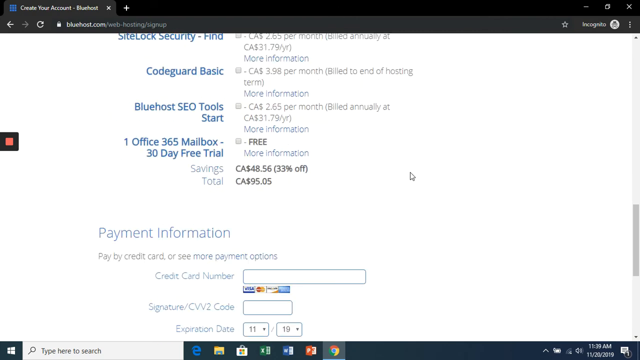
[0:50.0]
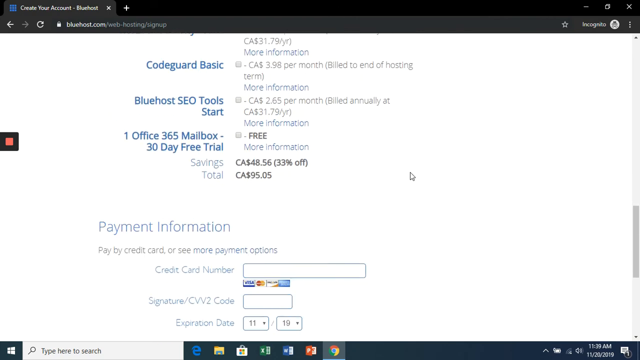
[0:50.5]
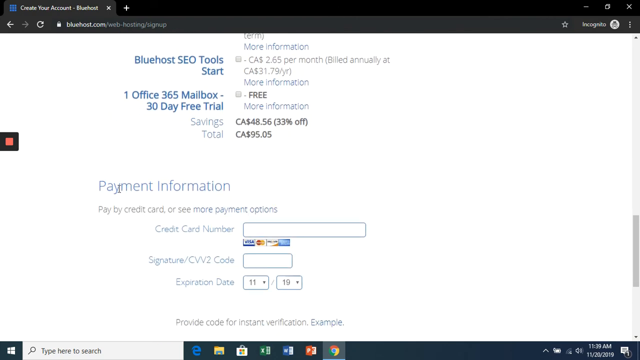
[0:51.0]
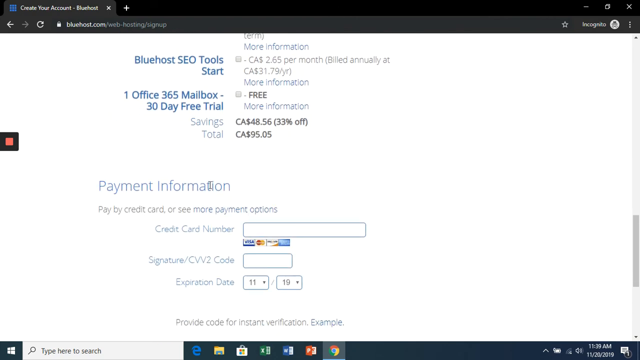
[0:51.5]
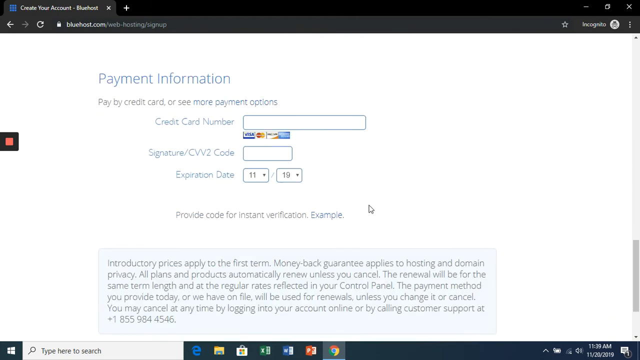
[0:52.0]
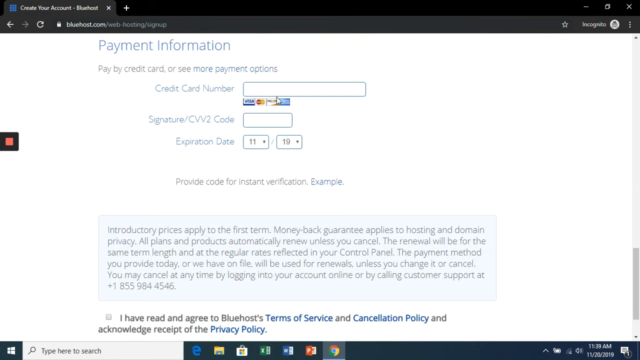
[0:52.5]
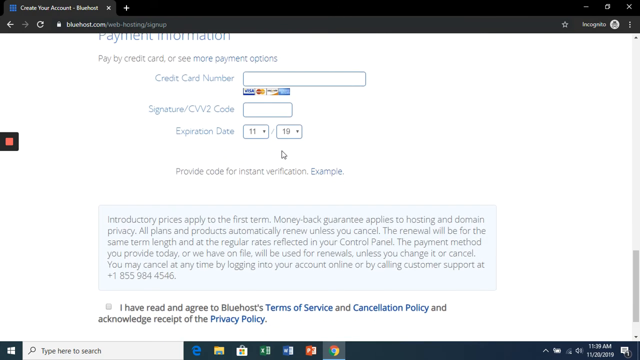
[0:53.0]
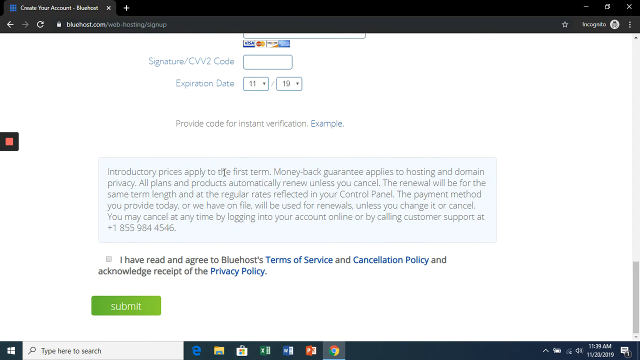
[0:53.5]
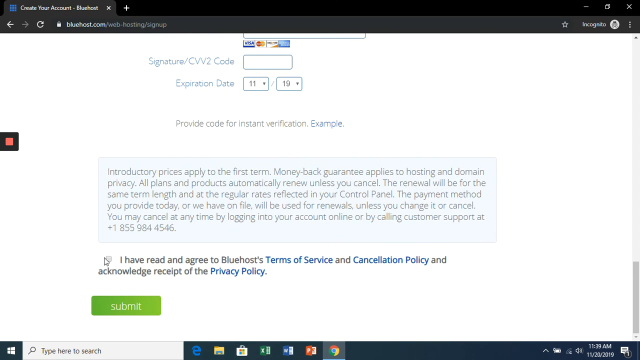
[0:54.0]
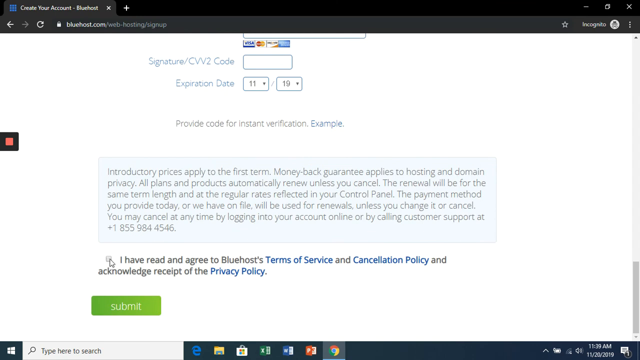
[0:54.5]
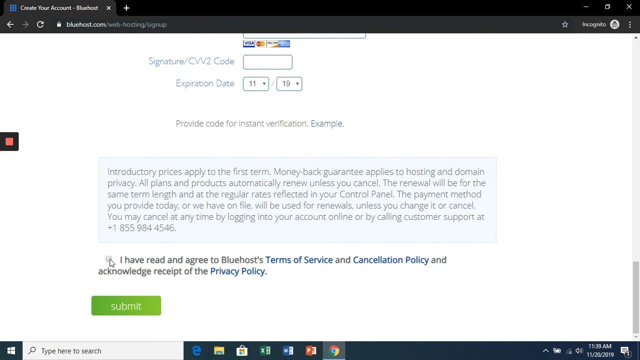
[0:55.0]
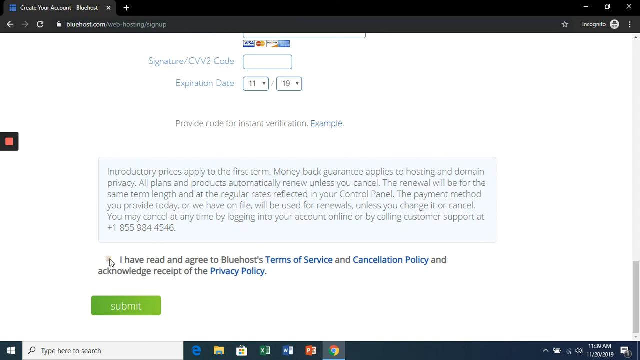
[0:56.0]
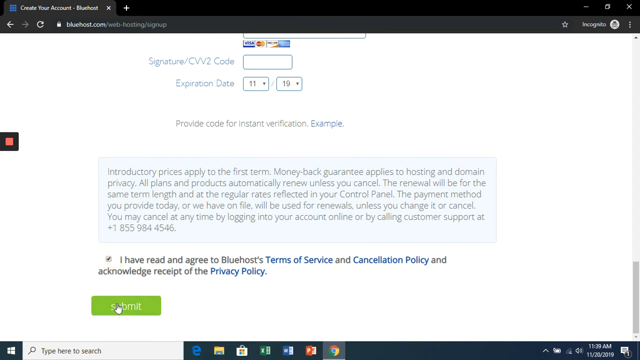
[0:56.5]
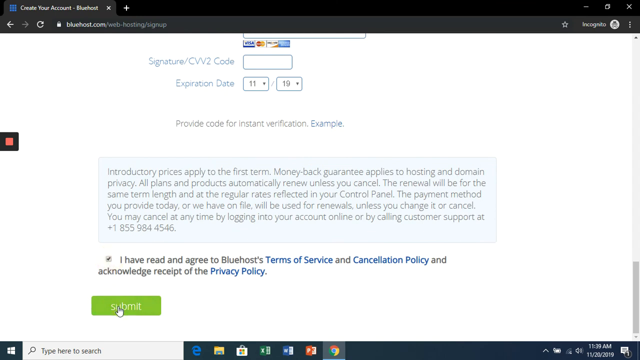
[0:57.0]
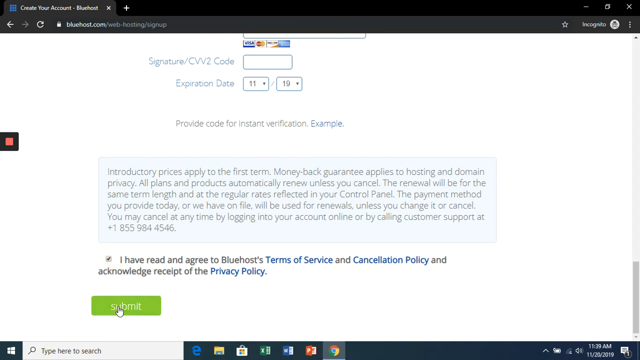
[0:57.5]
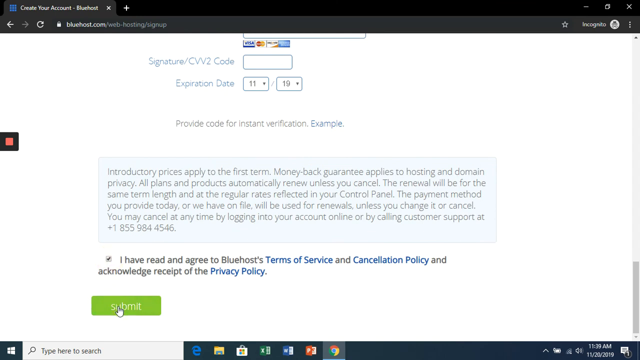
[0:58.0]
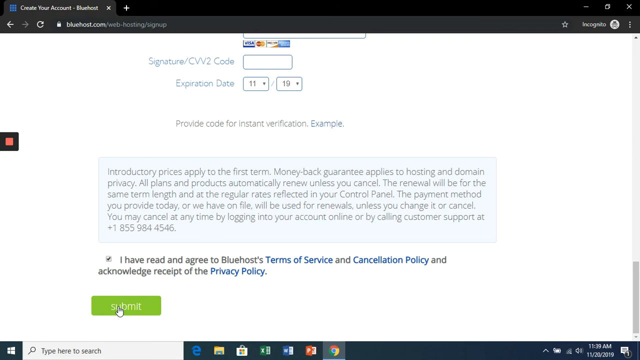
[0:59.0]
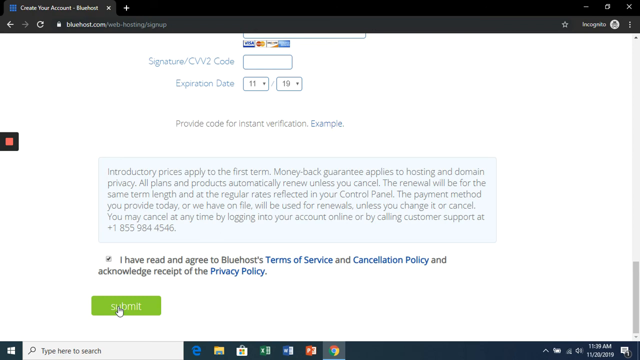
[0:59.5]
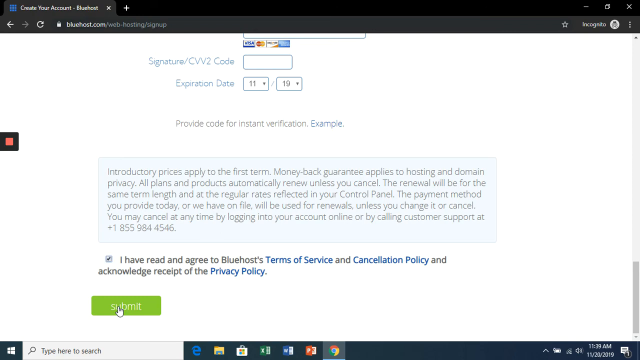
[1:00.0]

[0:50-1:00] The page scrolls down to the payment information section, where a credit card number and information can be entered to purchase the plan on the Bluehost website. There is also a checkbox for agreeing to the terms of service and cancellation policy and acknowledging the privacy policy, followed by submitting the purchase to register the domain with Bluehost.com. No physical subjects, people or animals, are shown.